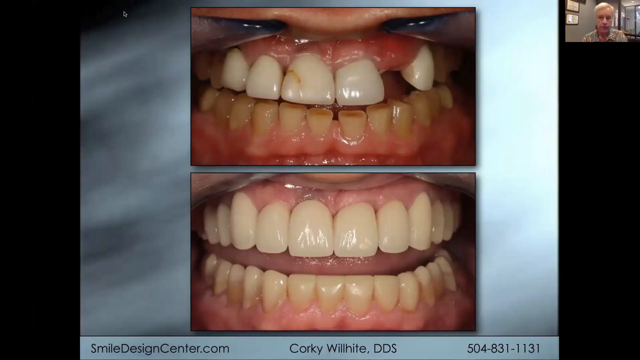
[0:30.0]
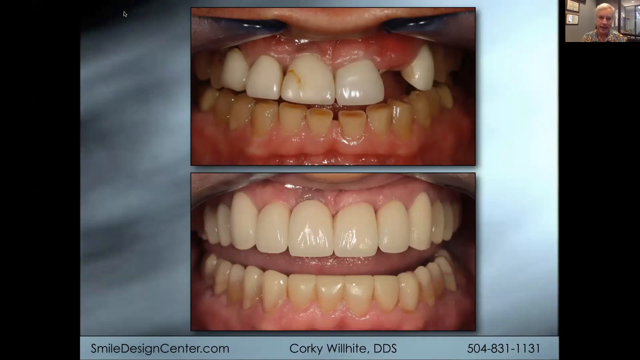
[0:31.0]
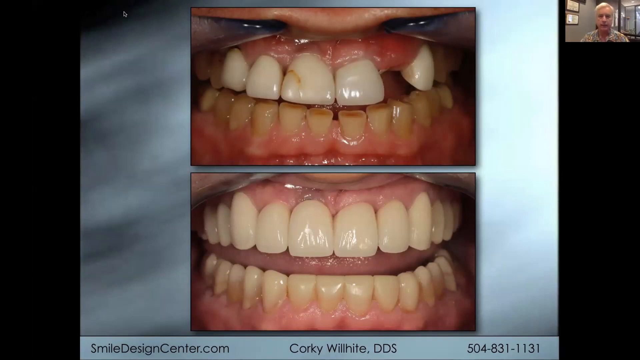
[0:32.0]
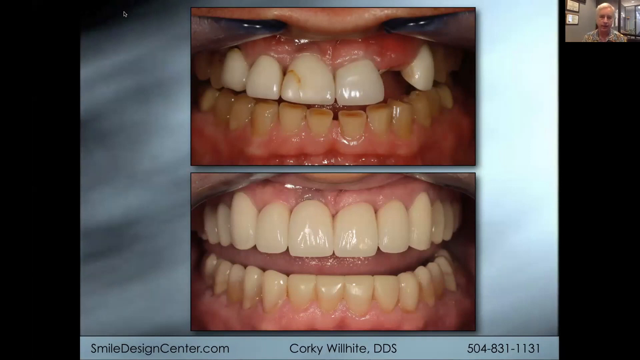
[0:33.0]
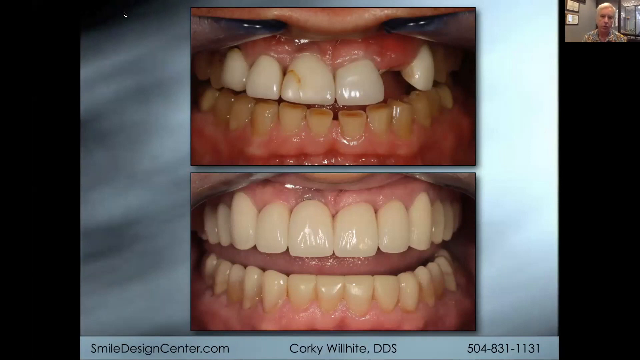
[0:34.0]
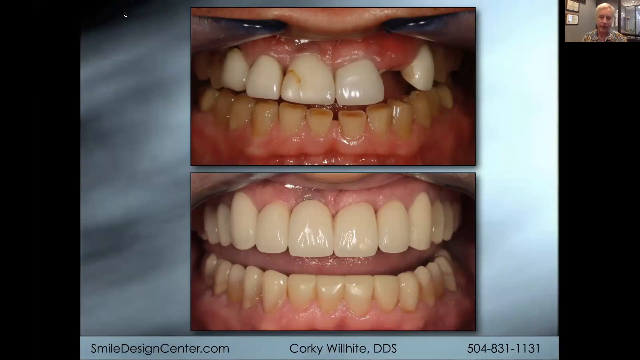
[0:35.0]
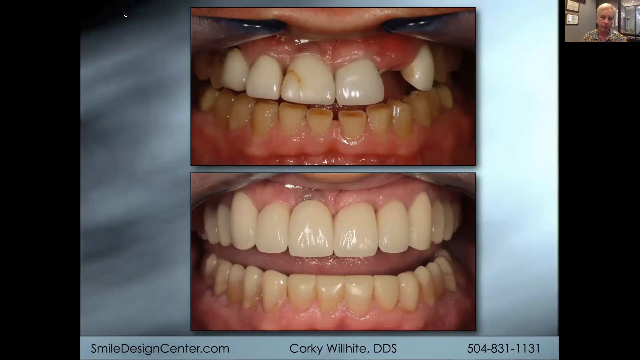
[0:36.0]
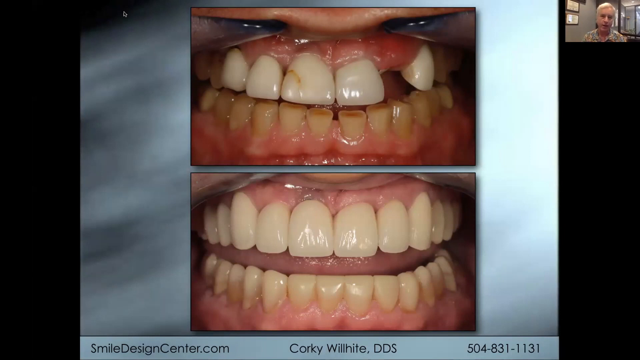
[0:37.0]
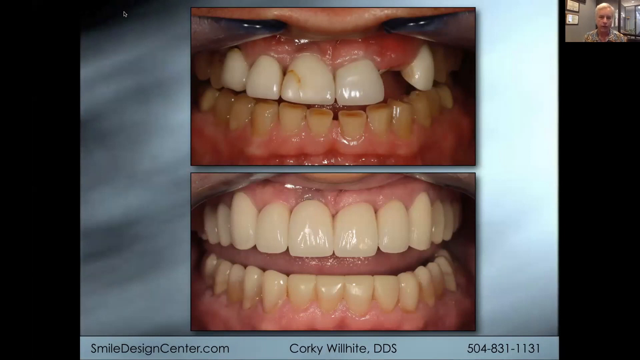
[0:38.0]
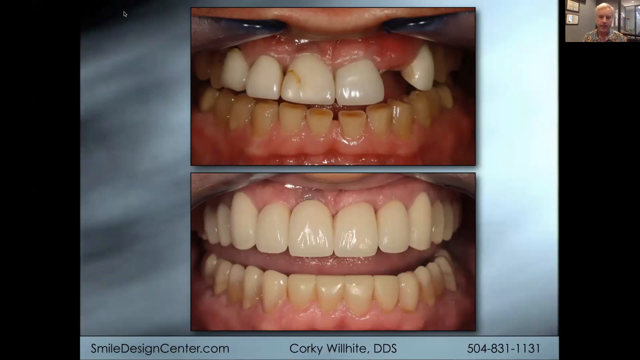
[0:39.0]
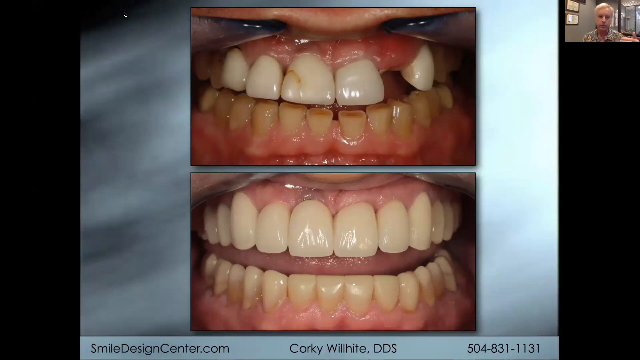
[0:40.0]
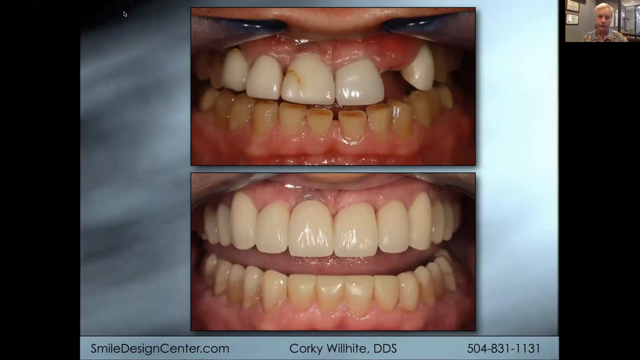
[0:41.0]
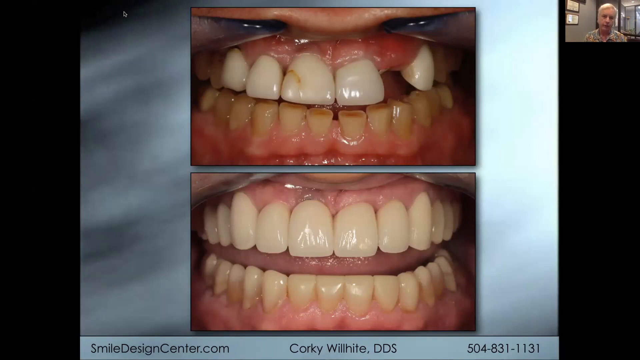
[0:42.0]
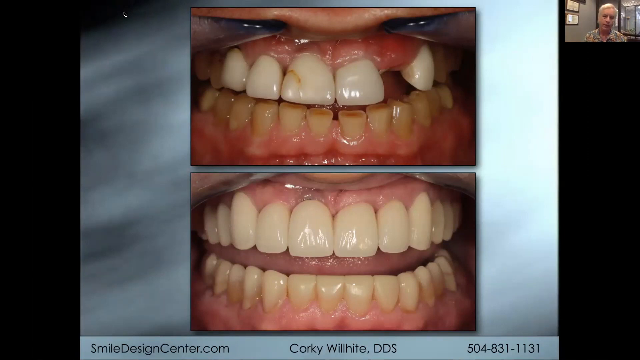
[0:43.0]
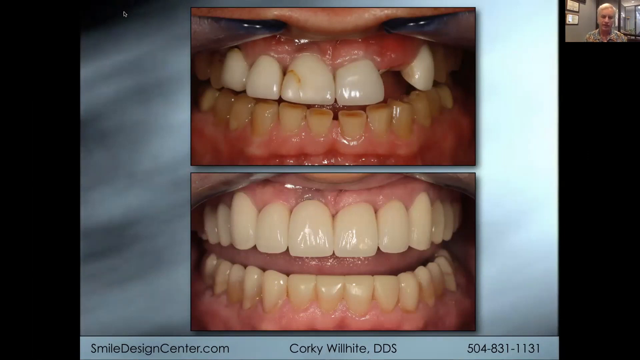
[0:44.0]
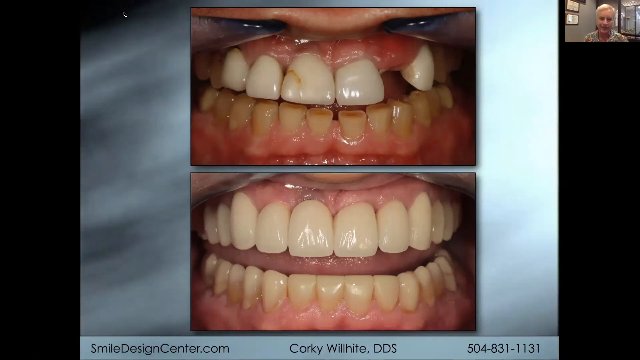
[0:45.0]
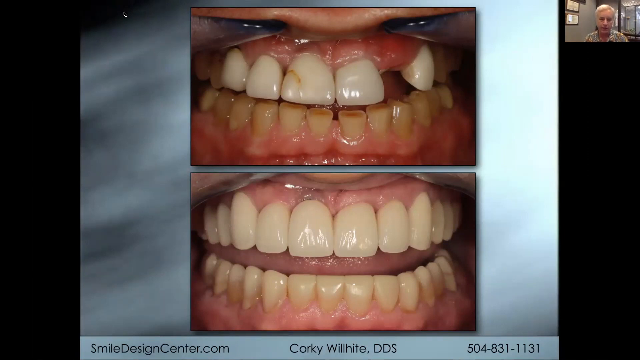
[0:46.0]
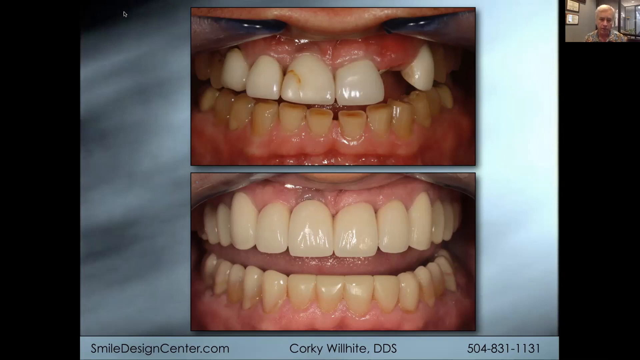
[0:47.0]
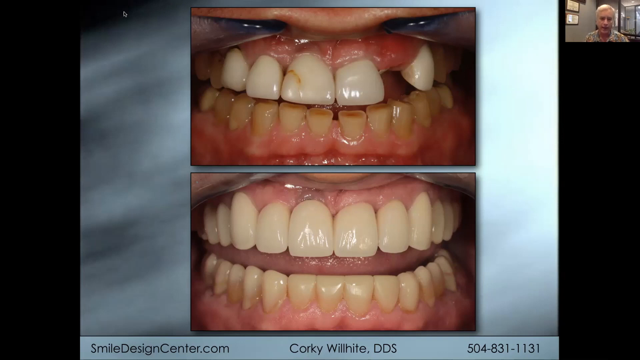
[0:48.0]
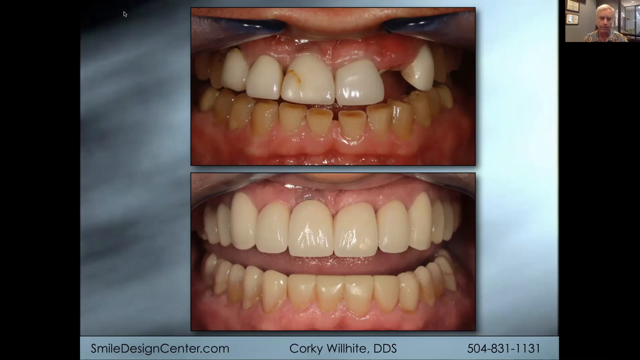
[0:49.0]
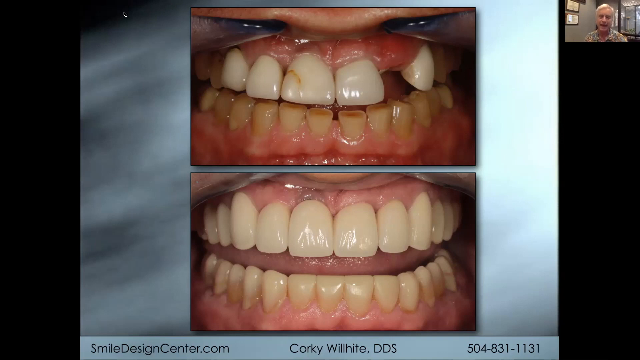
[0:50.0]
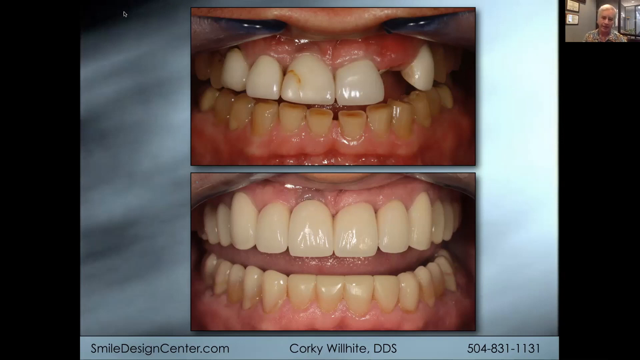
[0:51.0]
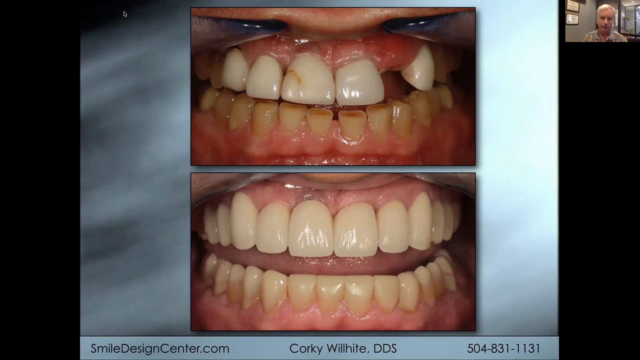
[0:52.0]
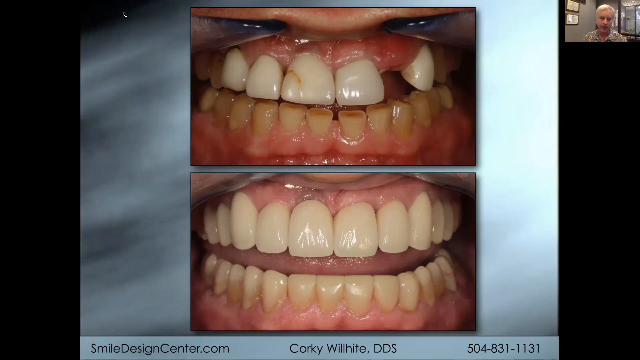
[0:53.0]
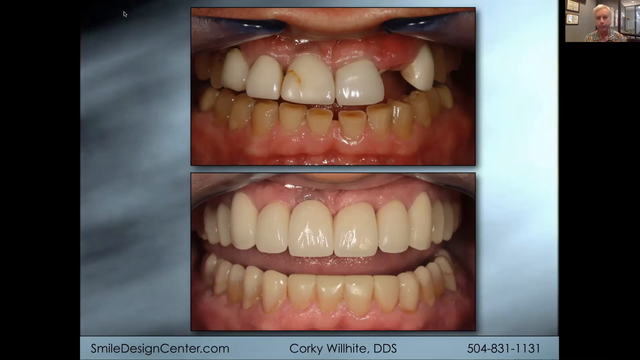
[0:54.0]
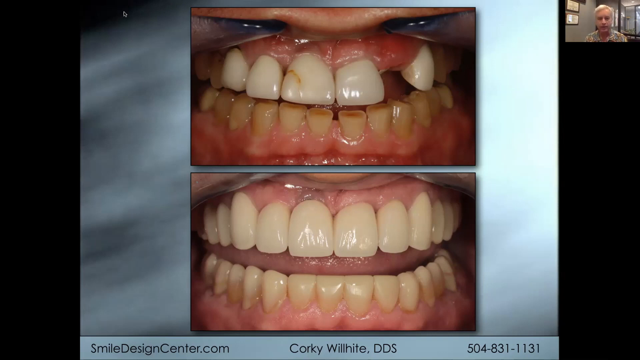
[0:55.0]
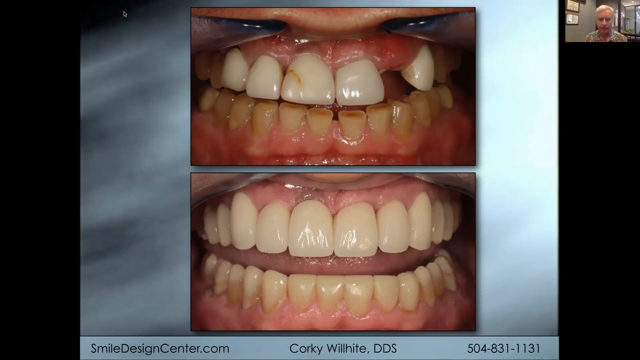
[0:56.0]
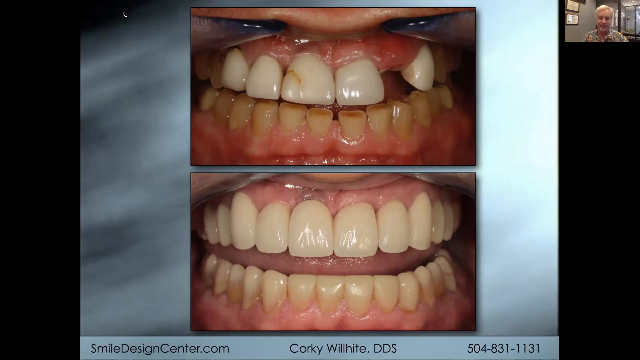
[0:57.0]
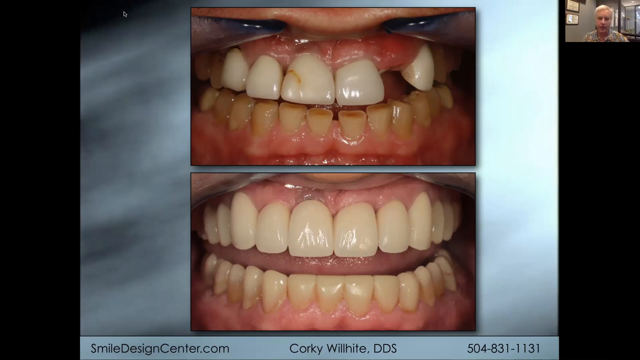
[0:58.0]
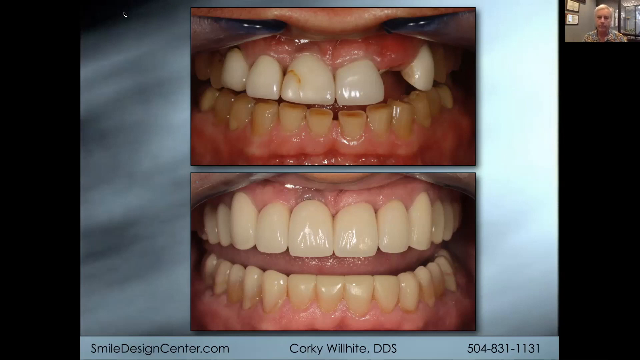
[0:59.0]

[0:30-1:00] The before and after image of teeth is shown. In the first, before, image, a tooth is missing on the right-hand side and the gums look like they have some inflammation. The front tooth on the left-hand side looks like it may be cracked and stained, and the whole bottom row of teeth looks very brown, as if they haven't been cleaned in a while. The second image shows a nice straight set of teeth, all white and shiny, looking uniform and of equal size and alignment. The image stays on screen for a while. The man is still present in a small thumbnail in the top right-hand side of the screen, and he is still speaking while the image is shown. The images are shown on top of a background with what looks like a blurry effect in grey, white and black.